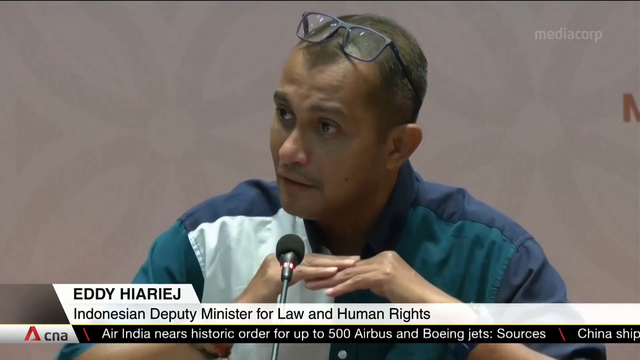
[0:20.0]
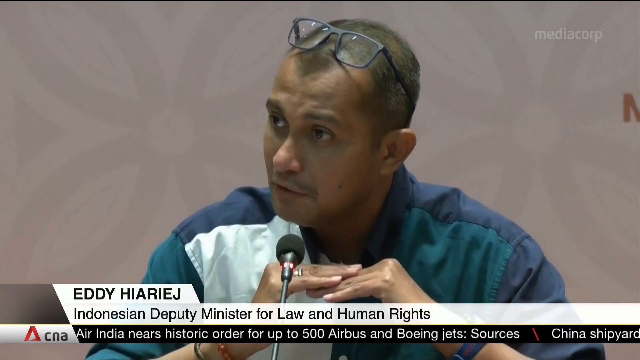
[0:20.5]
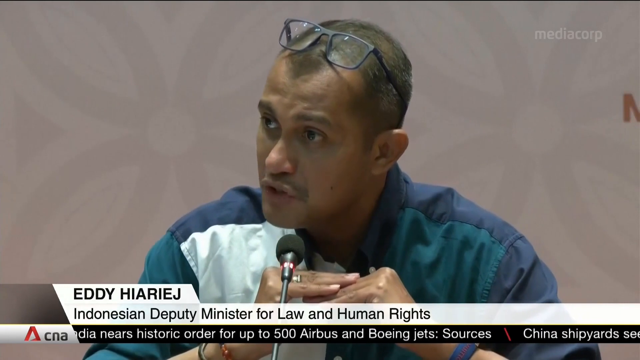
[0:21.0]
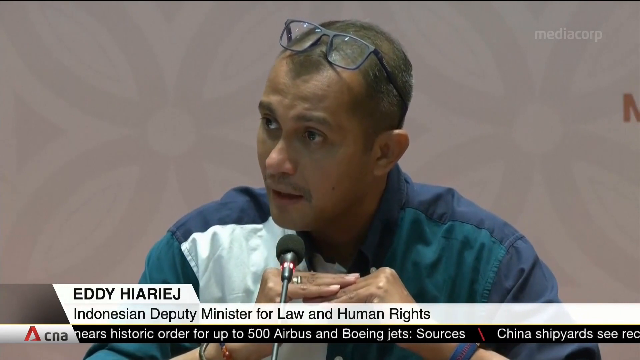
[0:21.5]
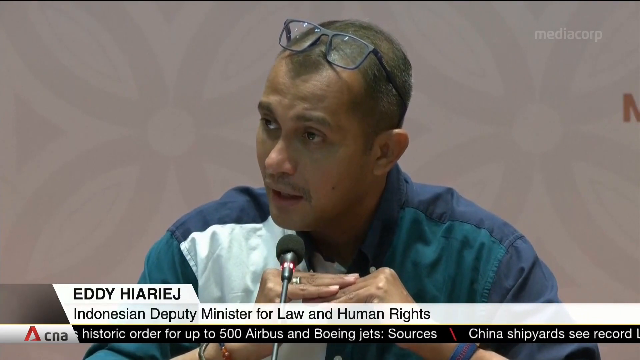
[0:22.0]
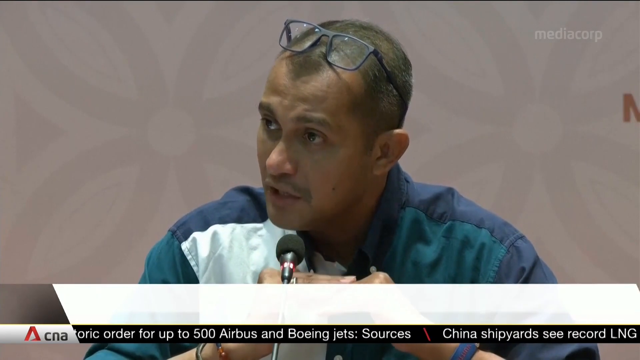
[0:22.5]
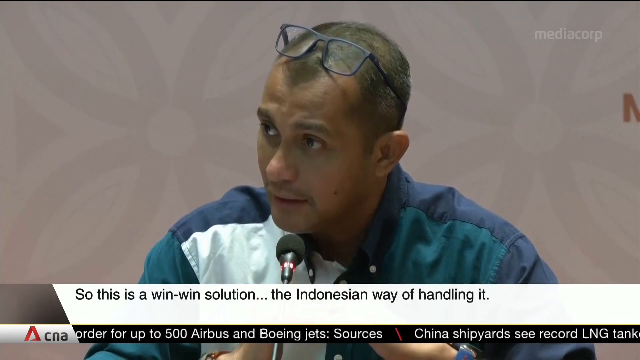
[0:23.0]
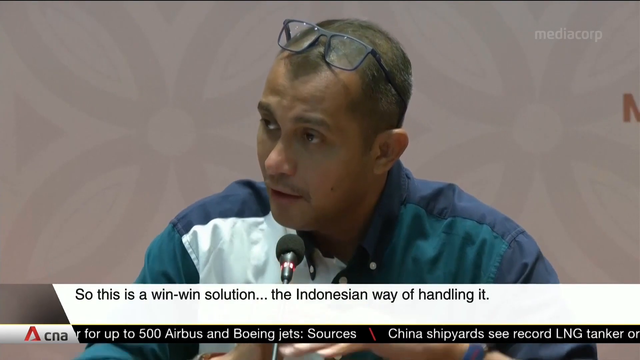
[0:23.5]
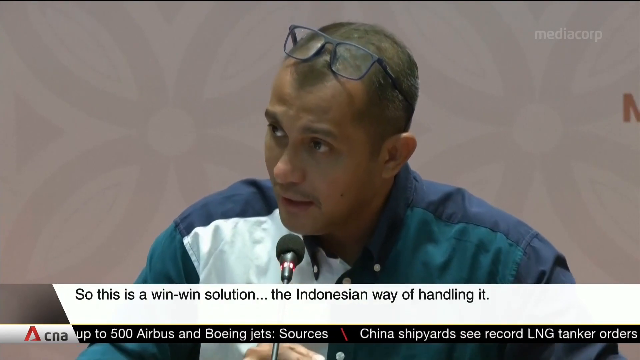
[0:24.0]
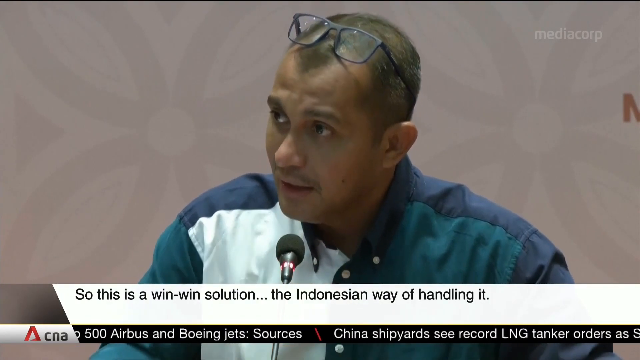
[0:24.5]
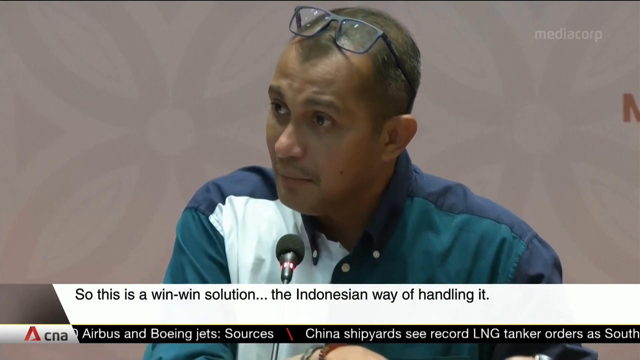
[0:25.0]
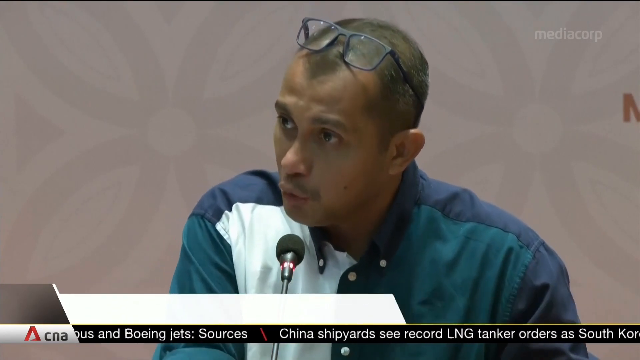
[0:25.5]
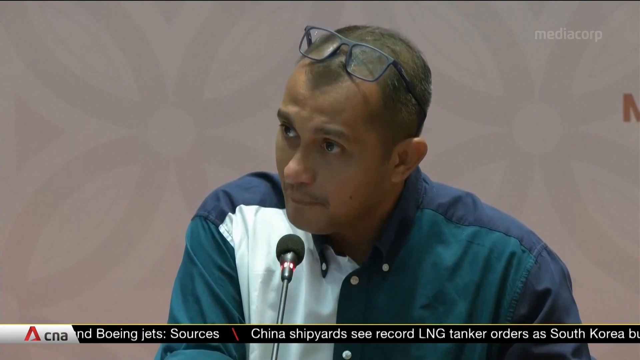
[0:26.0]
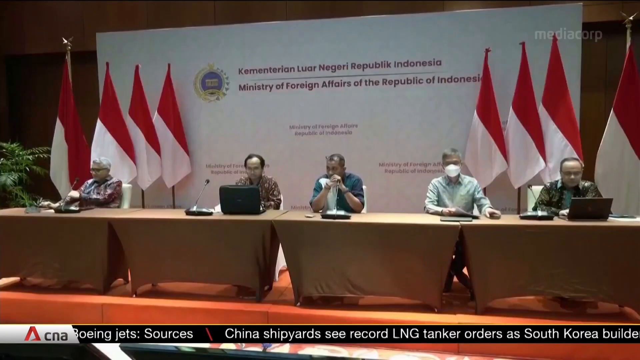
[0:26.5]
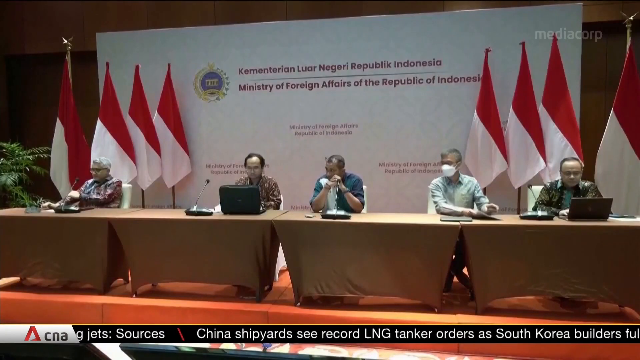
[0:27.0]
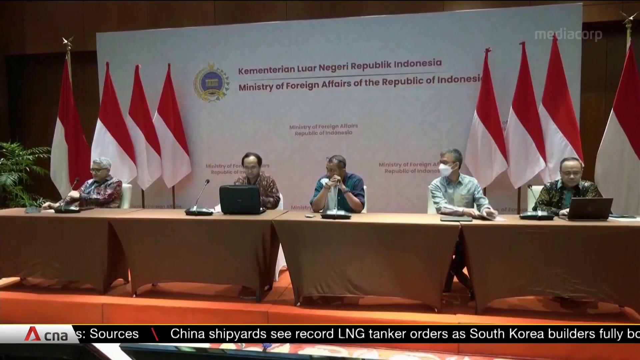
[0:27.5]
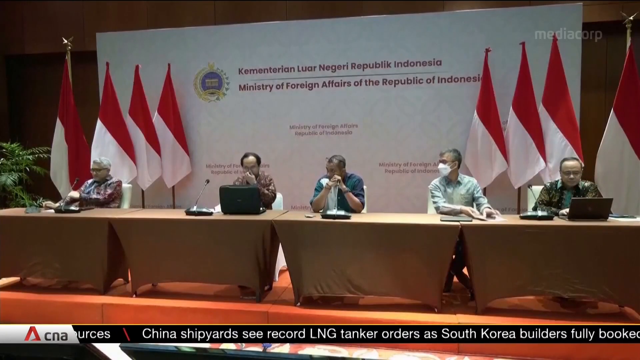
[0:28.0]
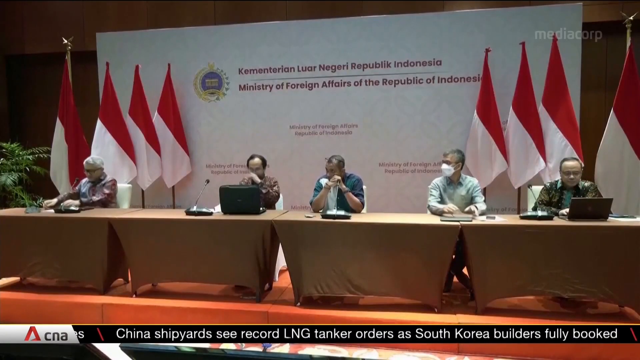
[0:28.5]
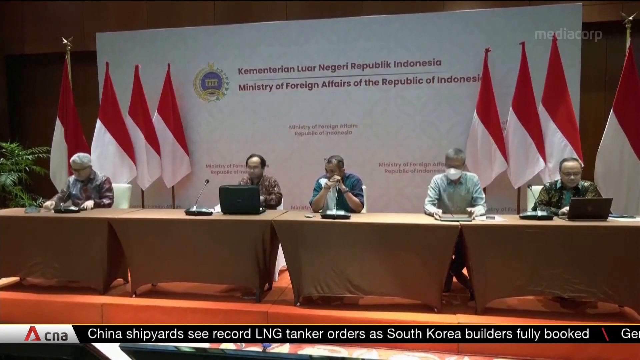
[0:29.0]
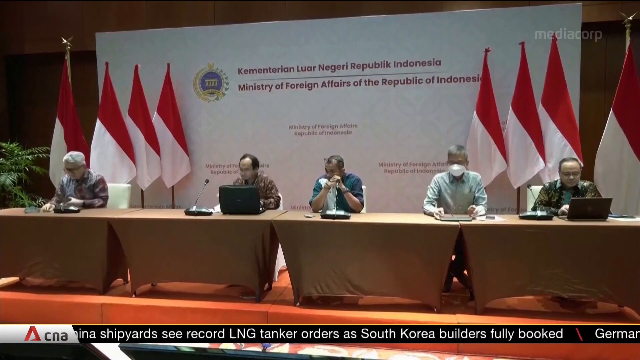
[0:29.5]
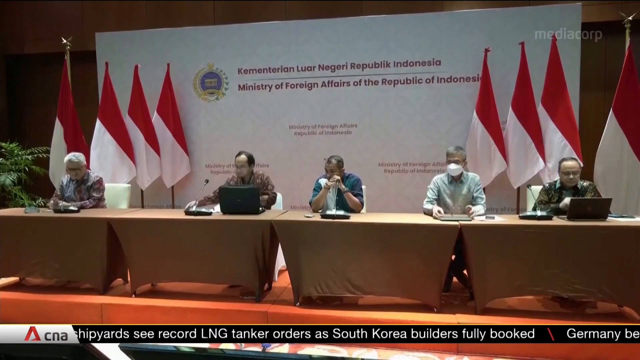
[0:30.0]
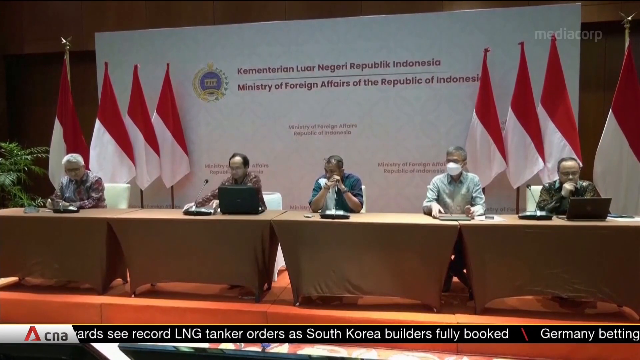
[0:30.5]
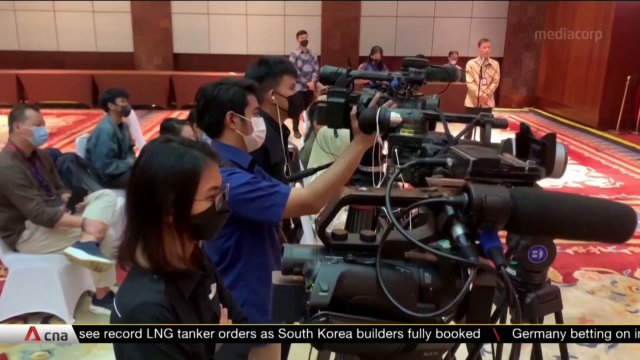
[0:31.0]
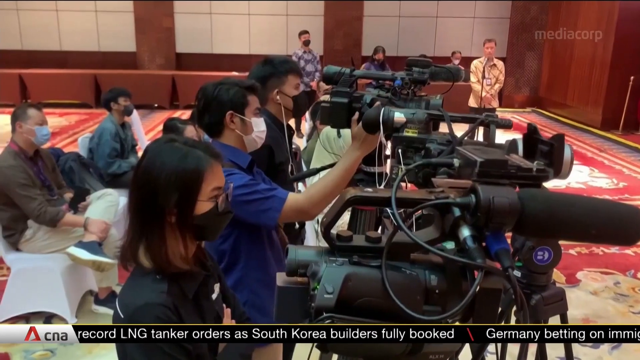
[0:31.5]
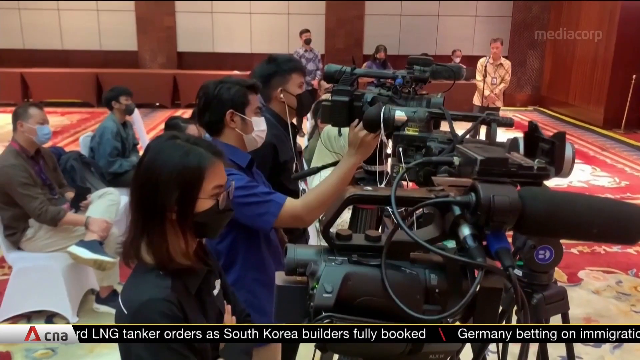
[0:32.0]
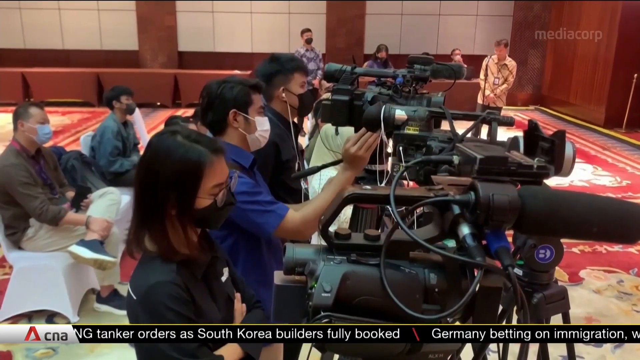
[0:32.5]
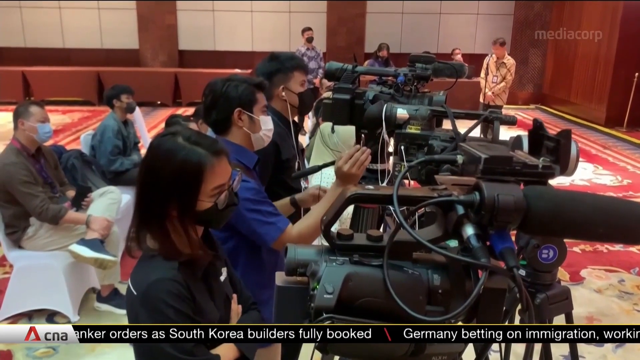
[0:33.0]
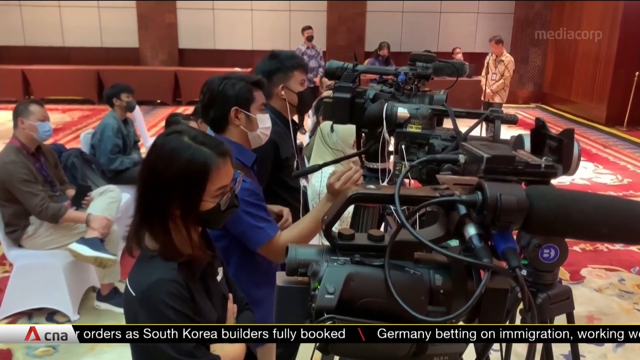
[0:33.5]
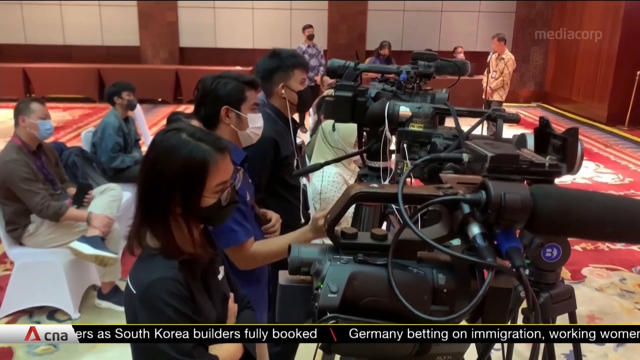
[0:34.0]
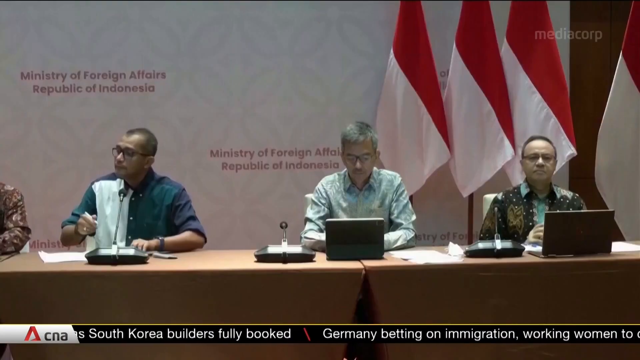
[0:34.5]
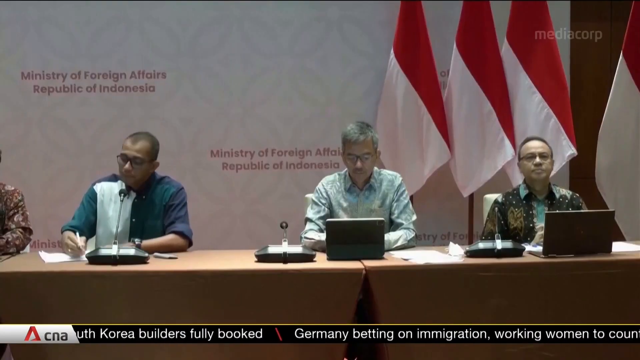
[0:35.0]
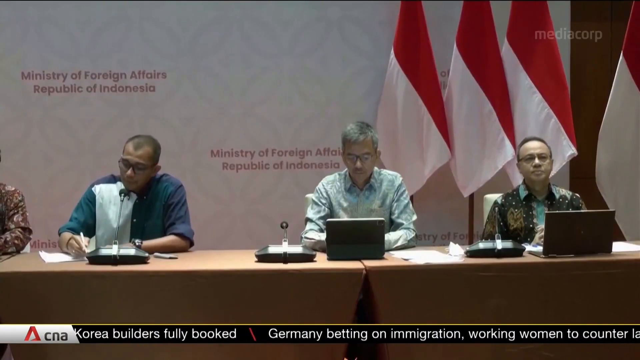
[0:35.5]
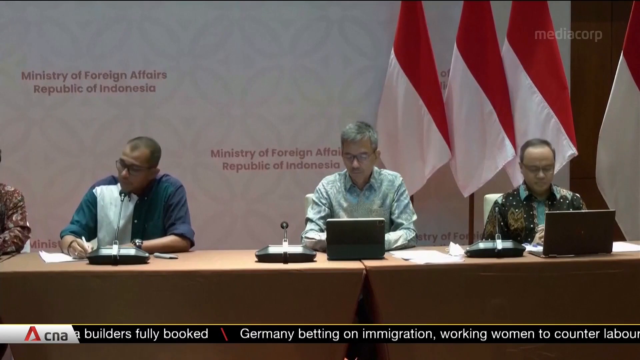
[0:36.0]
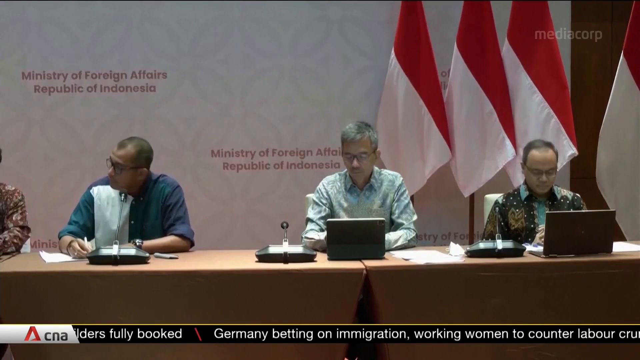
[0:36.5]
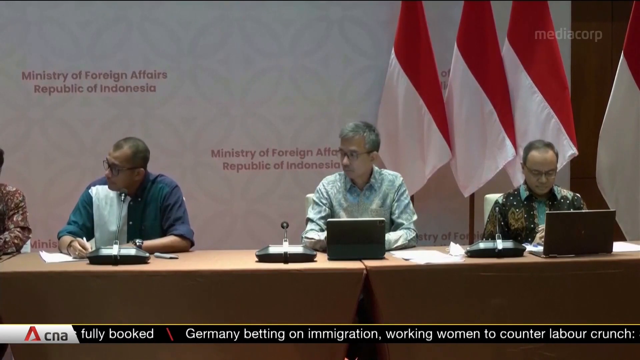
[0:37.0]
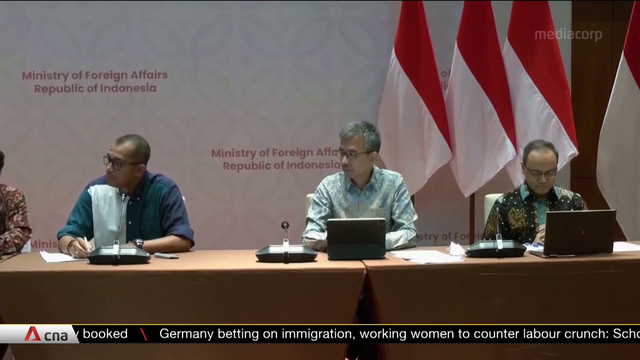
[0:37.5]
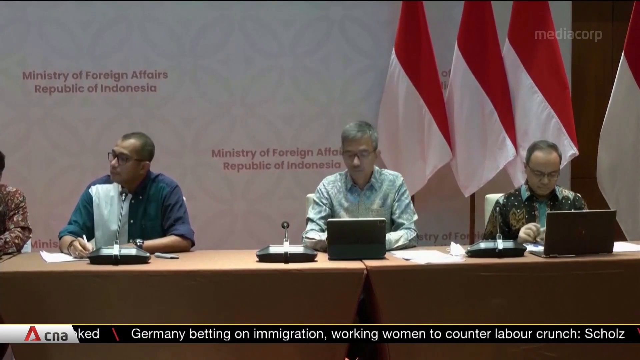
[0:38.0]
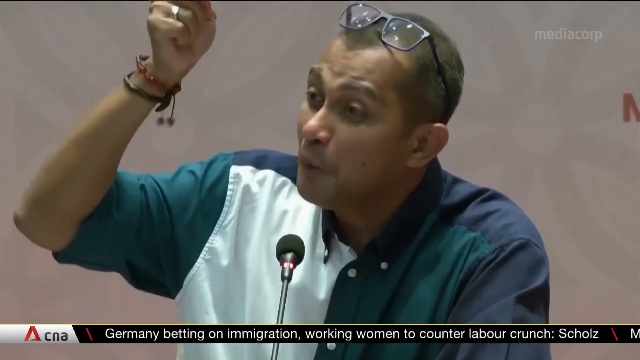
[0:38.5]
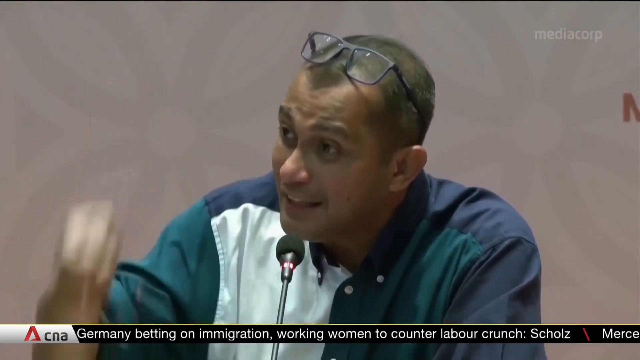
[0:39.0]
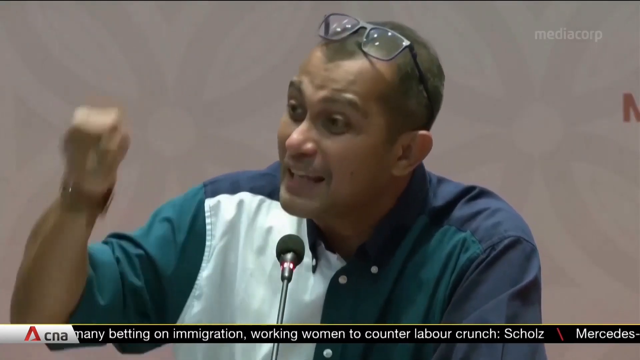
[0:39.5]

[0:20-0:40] The man in the green shirt with glasses on top of his head talks. Black text names him as "Eddie Harage" with the title "Deputy Minister for Law and Human Rights", followed by the text "so this is a win-win solution, the Indonesian way of handling it." He is sitting in front of a committee of five people. Behind them are eight flags, red on top and white on the bottom, the Indonesian flag. Text reads "Ministry of Foreign Affairs of the Republic of Indonesia." The committee sits at a brown table made of about four tables placed together; two people have computers open in front of them, and one wears a mask. The video then shows many people wearing masks with cameras in front of them, about seven cameras or rows of black cameras.